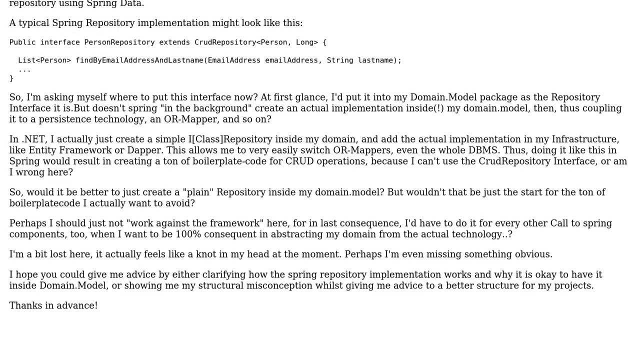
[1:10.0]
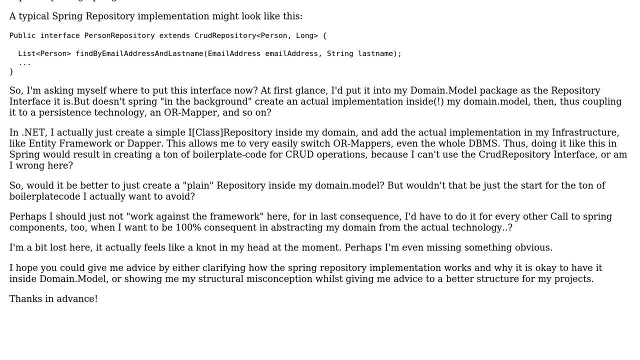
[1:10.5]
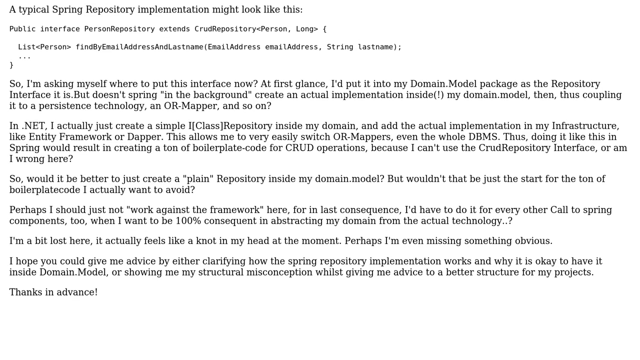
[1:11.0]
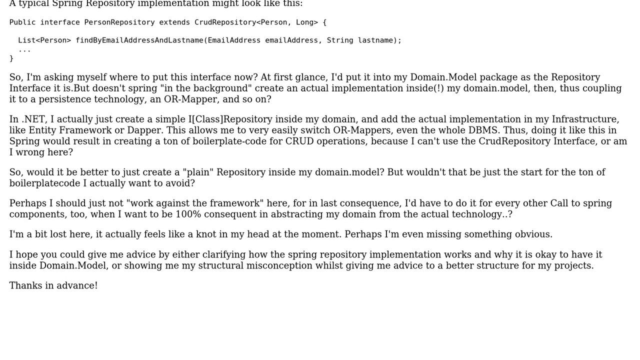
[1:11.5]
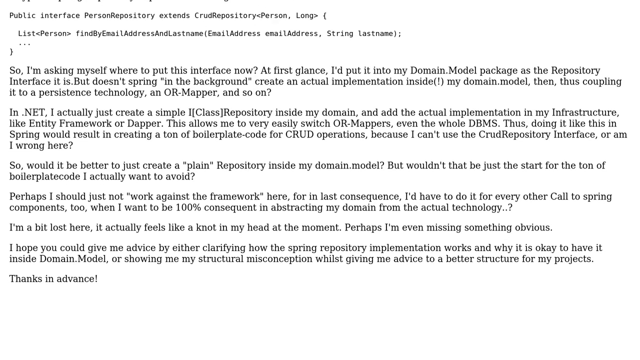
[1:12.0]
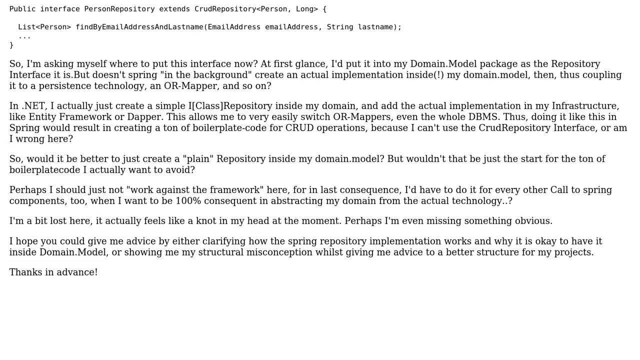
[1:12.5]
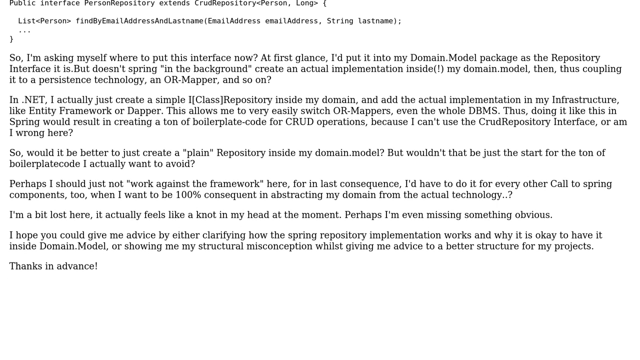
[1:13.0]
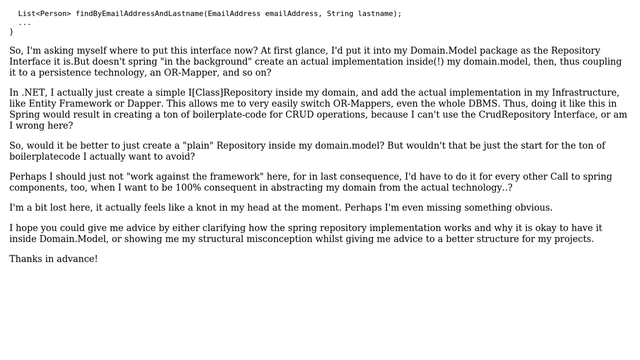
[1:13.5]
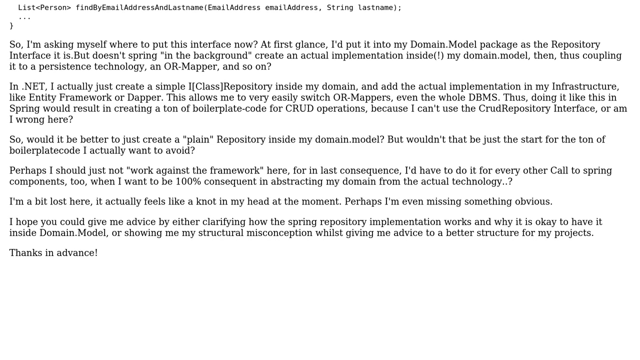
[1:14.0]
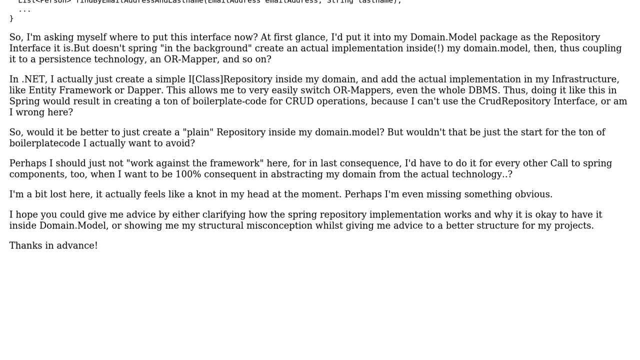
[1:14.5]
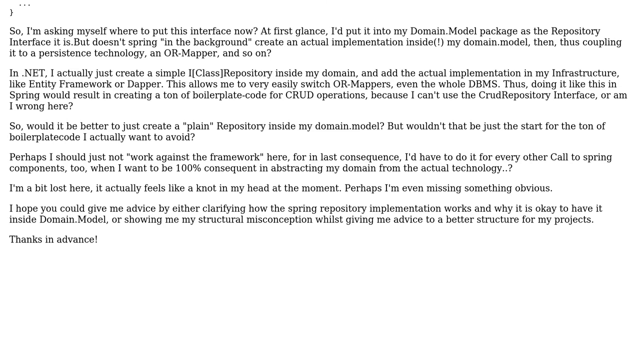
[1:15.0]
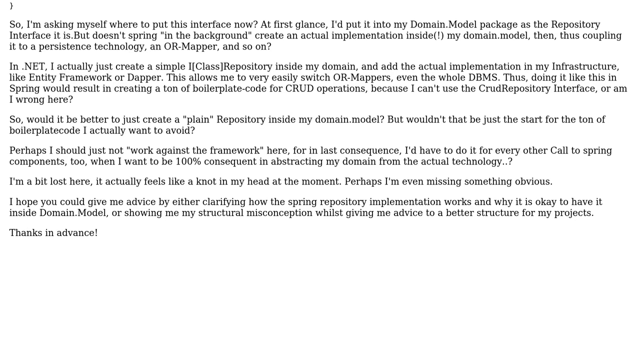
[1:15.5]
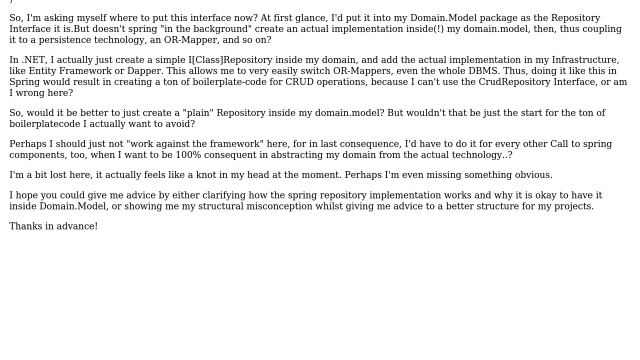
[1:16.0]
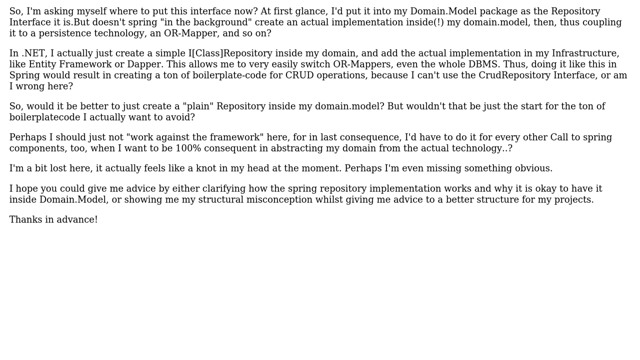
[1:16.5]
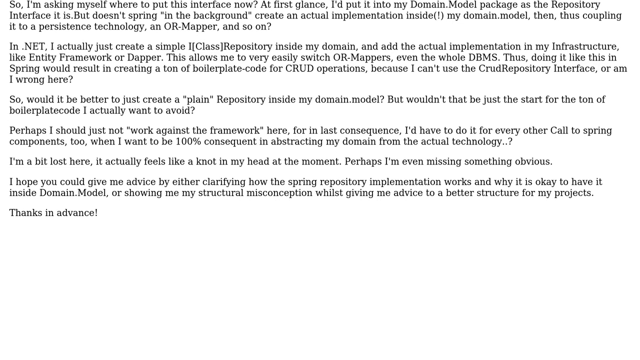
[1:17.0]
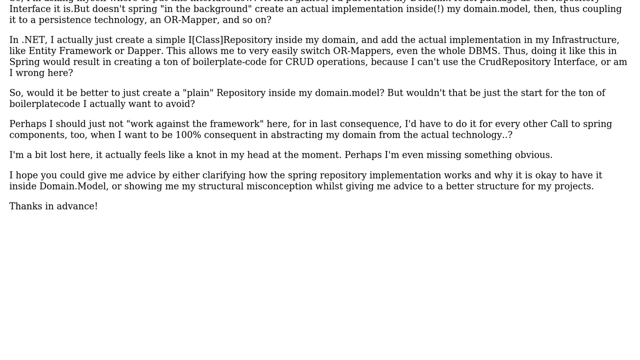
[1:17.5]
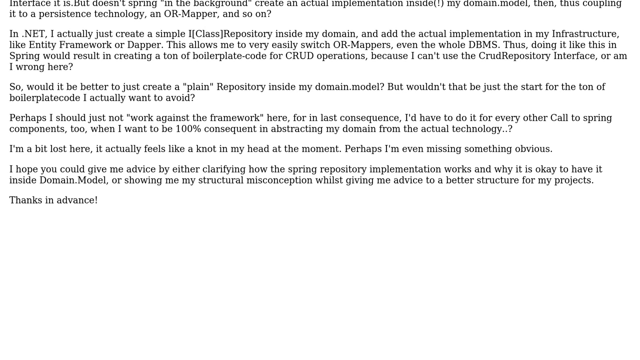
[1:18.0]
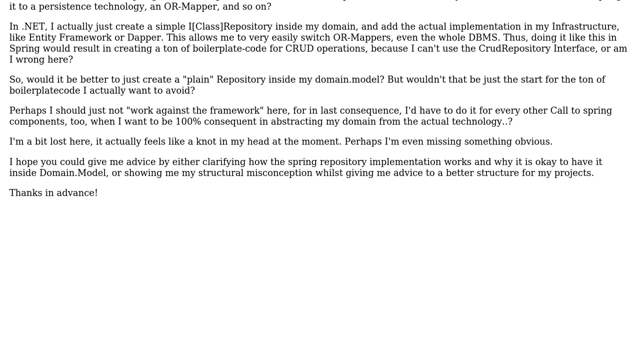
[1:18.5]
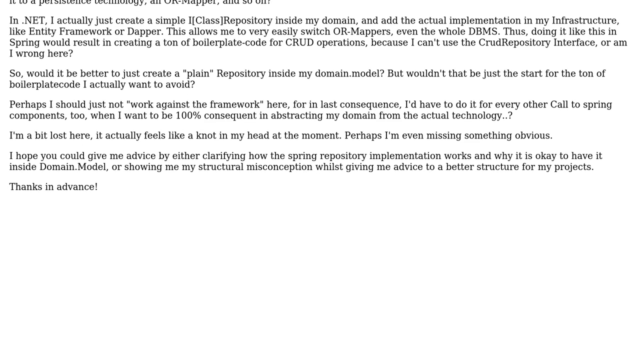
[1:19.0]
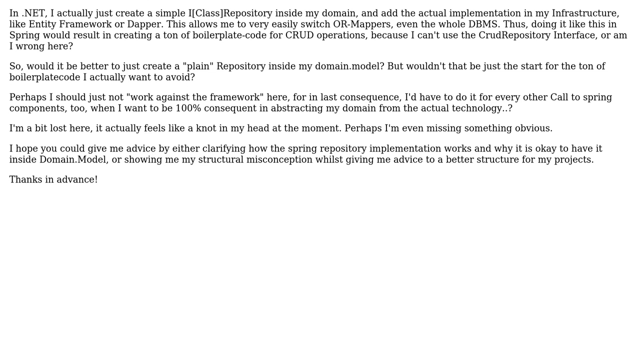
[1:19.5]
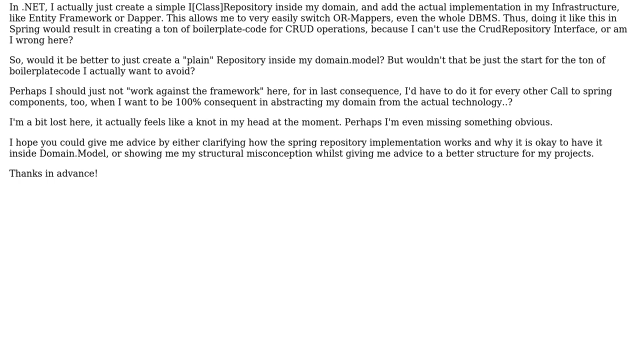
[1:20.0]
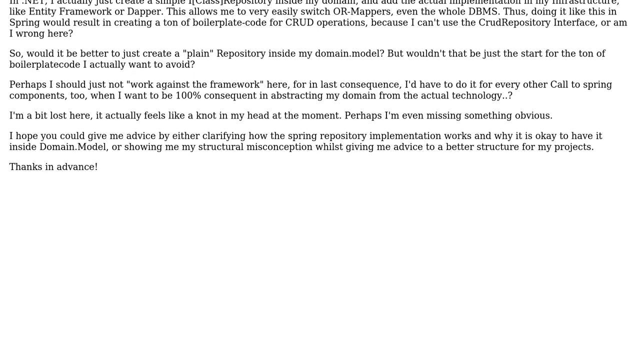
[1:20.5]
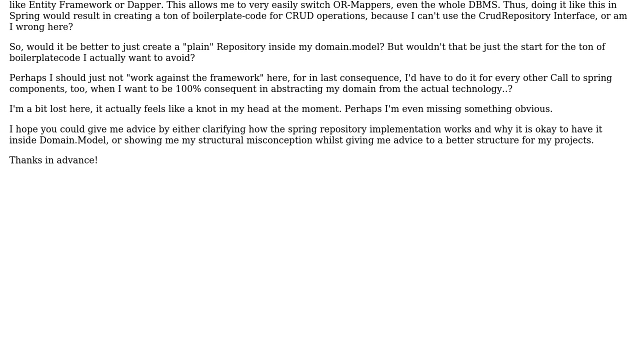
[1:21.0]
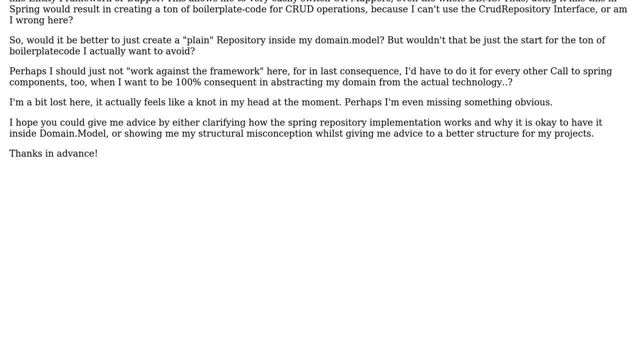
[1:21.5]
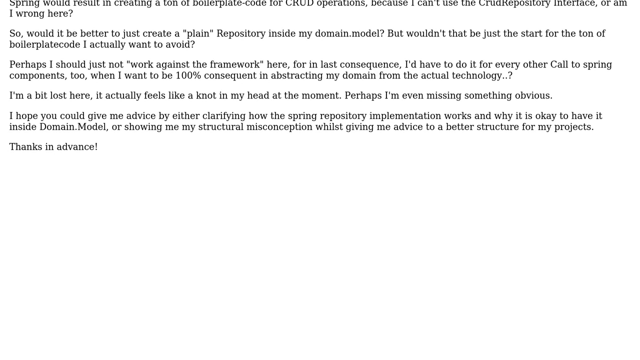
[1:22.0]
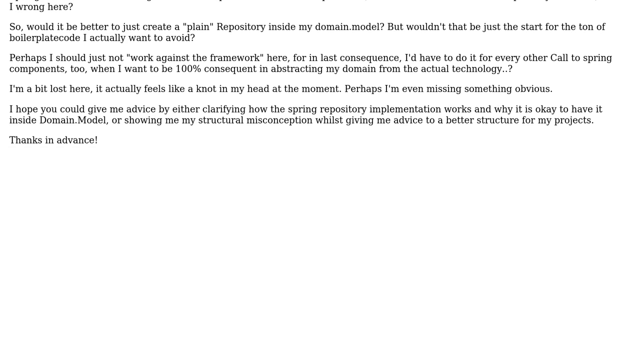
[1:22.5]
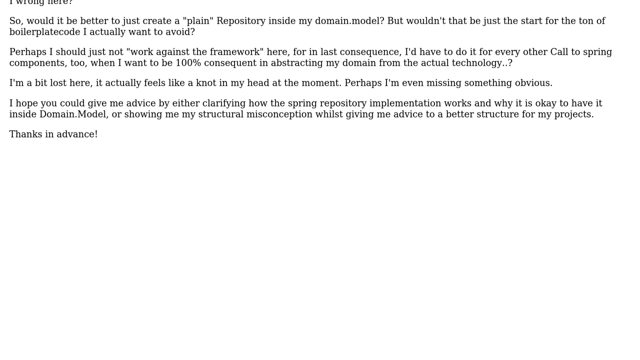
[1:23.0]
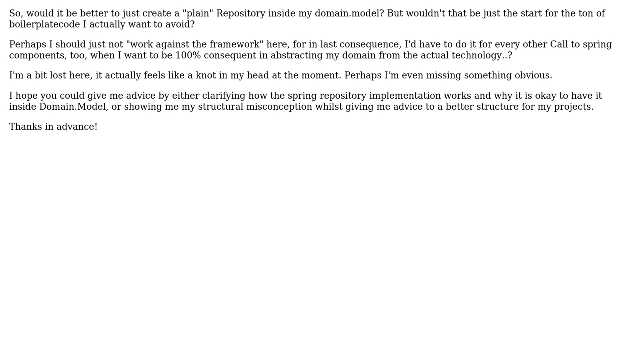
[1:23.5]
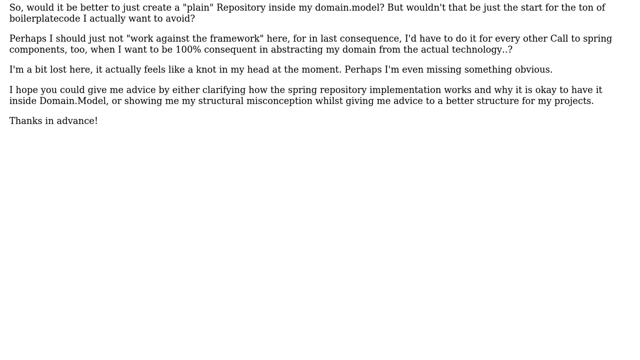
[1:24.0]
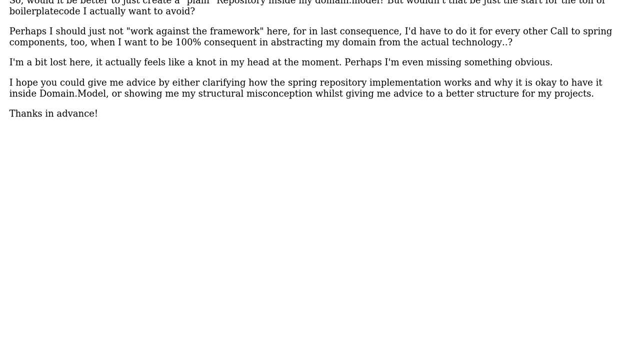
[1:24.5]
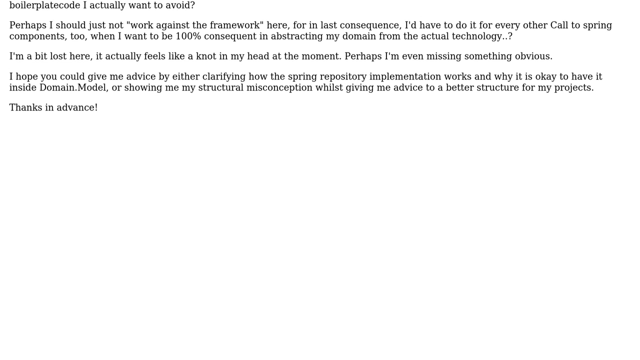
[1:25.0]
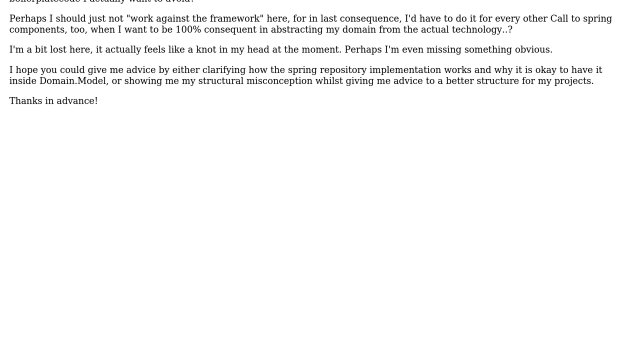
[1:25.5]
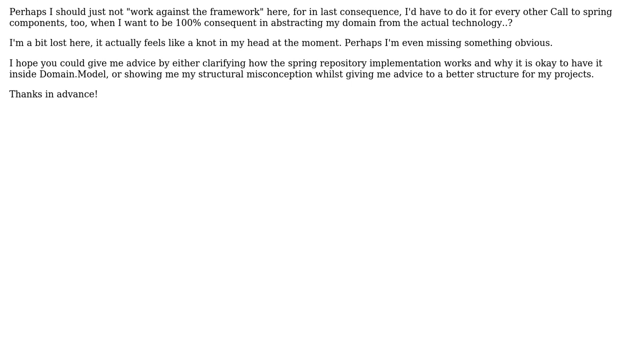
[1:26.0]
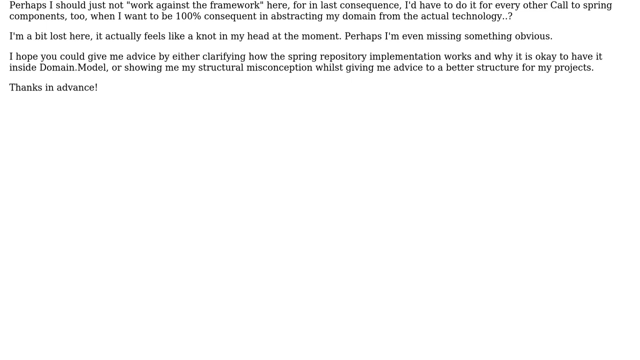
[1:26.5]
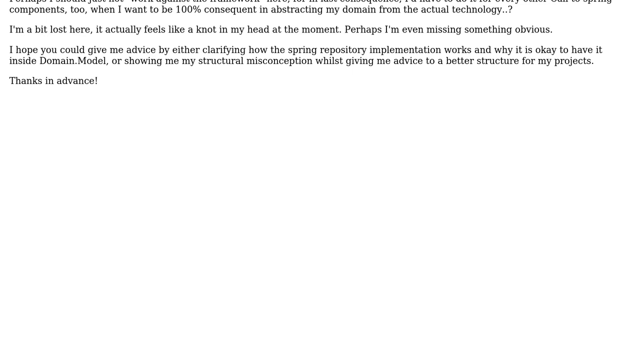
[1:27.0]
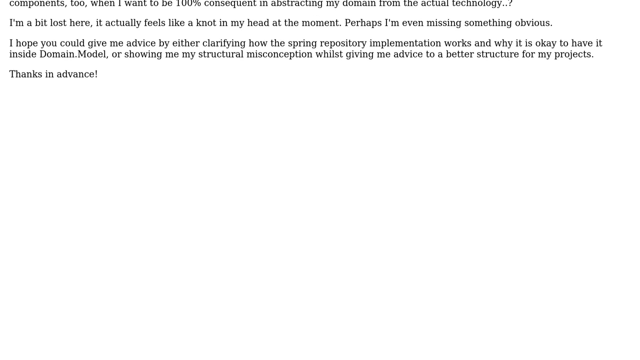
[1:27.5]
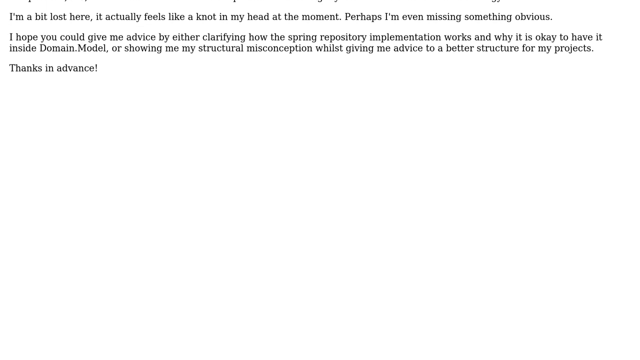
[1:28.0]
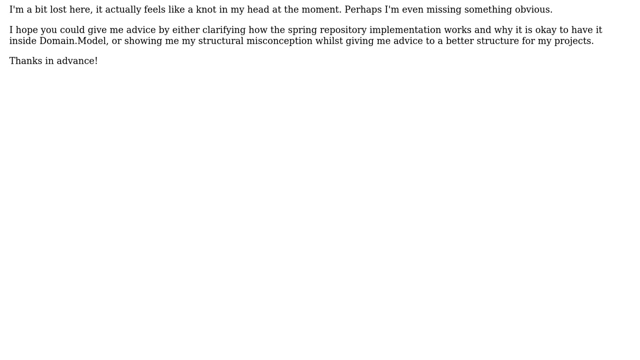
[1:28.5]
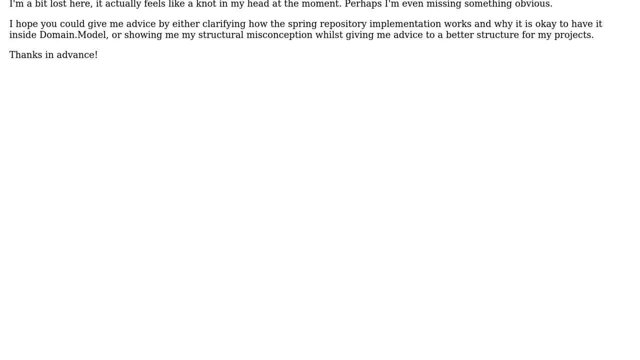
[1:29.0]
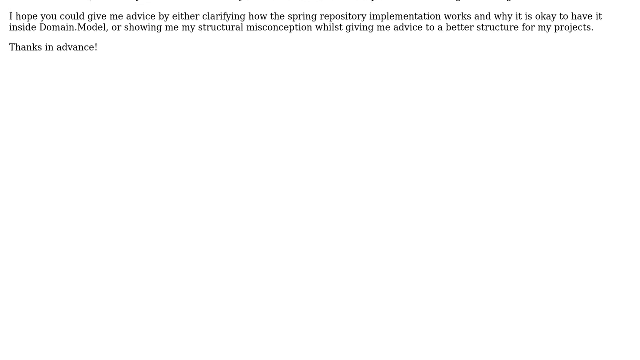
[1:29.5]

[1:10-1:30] The rest of the text shows it is probably a message posted on a message board, since it ends by asking for help. It reads "Perhaps I should just not "work against the framework" here", followed by "I'm a bit lost here." and "Perhaps I'm even missing something obvious." It asks for advice either clarifying how the spring repository implementation works and why it's okay to have it inside domain.model, or showing a structural misconception and suggesting a better structure, and ends "Thanks in advance." The page scrolls a little more to some white space at the bottom, and the scrolling stops.